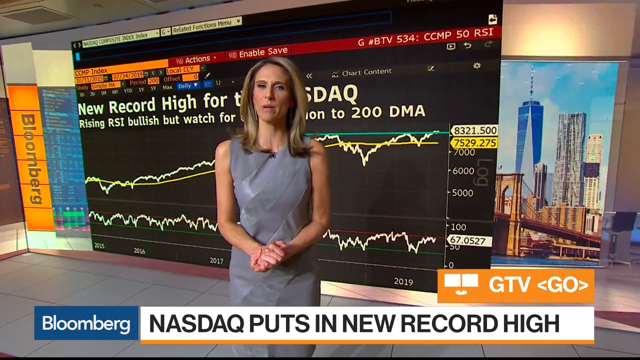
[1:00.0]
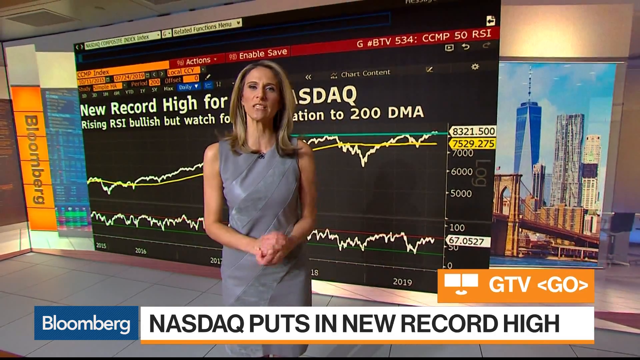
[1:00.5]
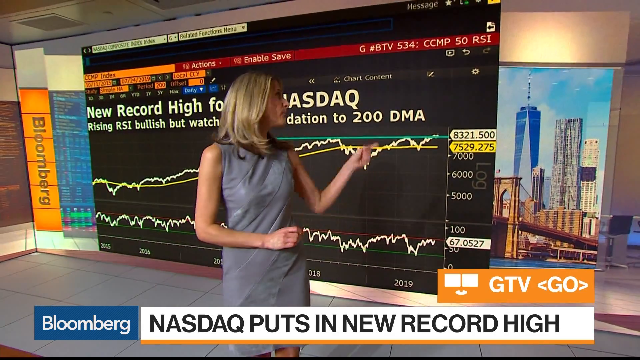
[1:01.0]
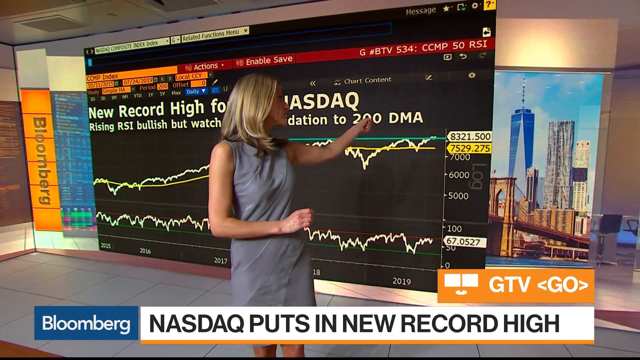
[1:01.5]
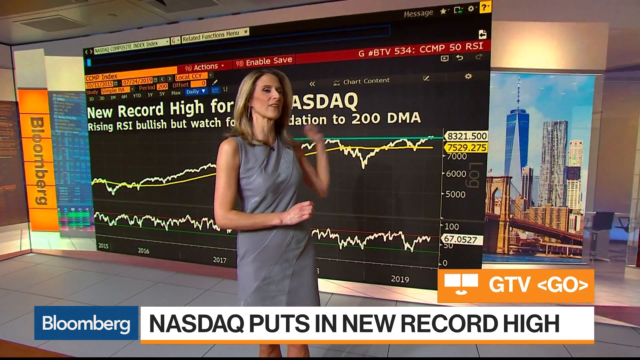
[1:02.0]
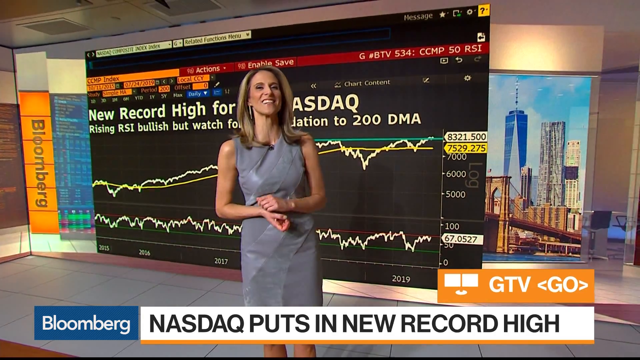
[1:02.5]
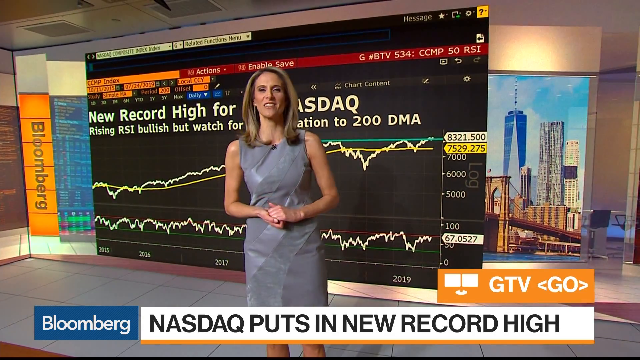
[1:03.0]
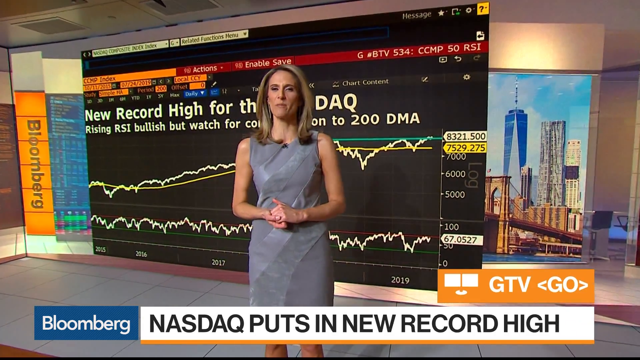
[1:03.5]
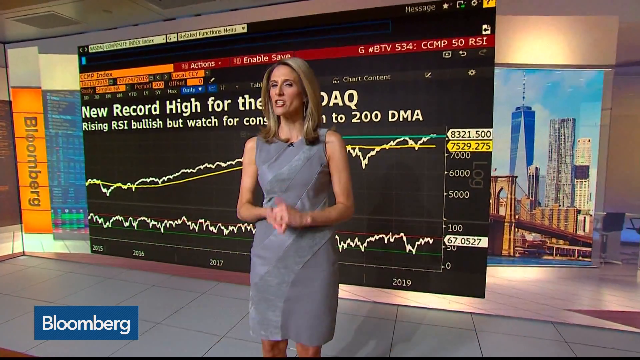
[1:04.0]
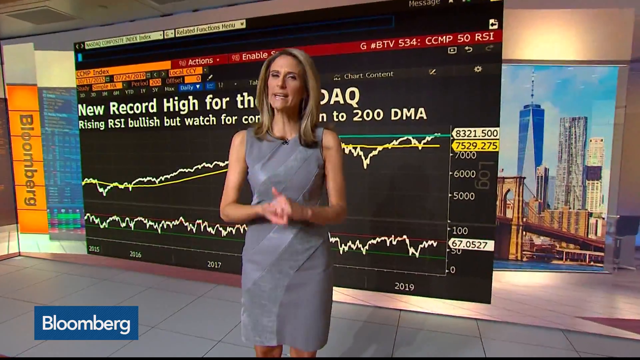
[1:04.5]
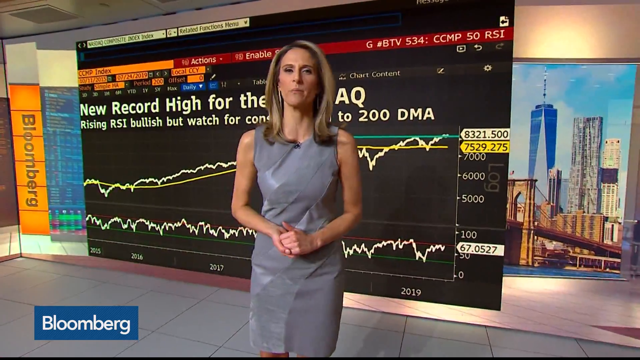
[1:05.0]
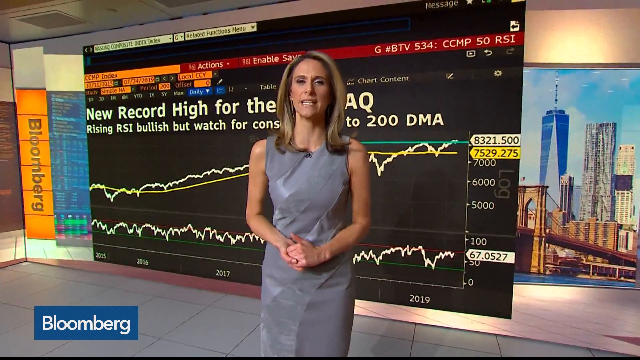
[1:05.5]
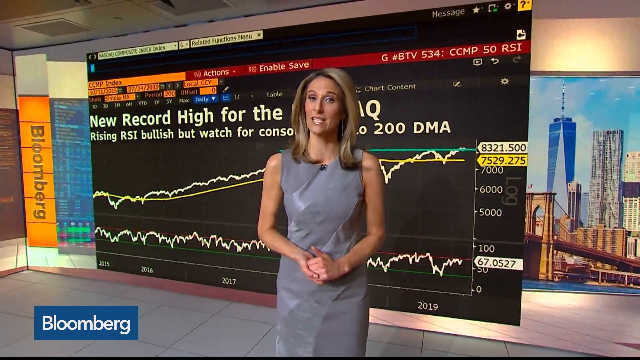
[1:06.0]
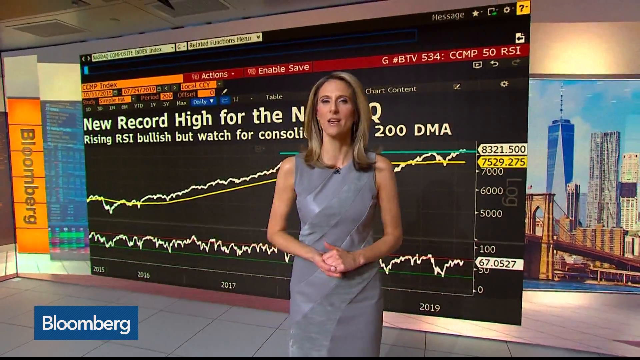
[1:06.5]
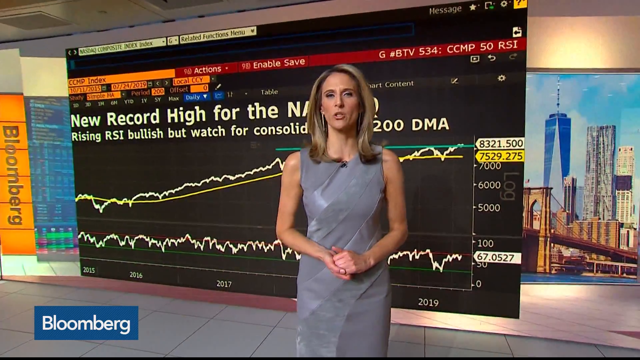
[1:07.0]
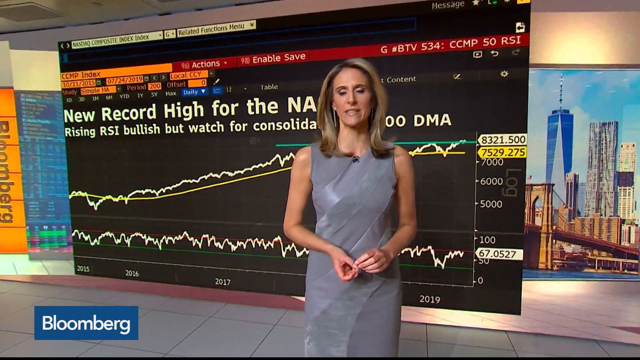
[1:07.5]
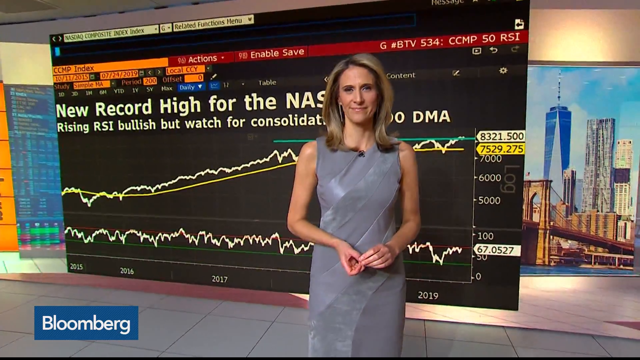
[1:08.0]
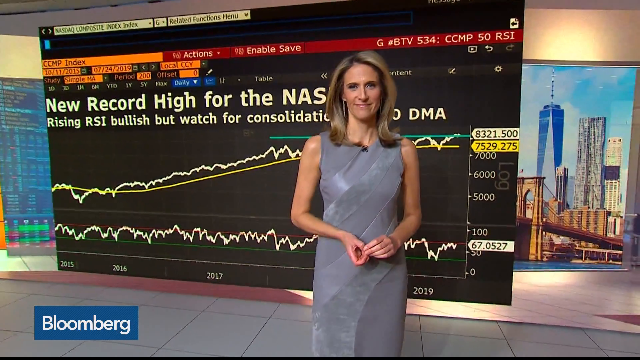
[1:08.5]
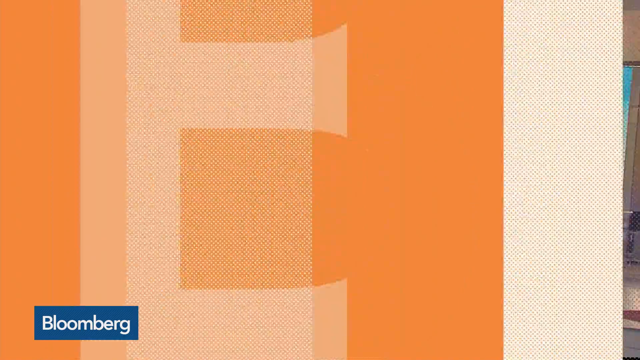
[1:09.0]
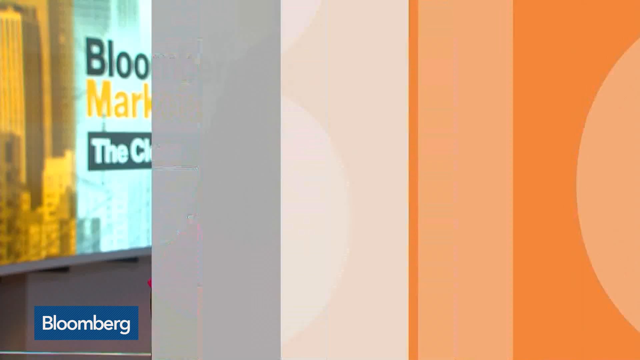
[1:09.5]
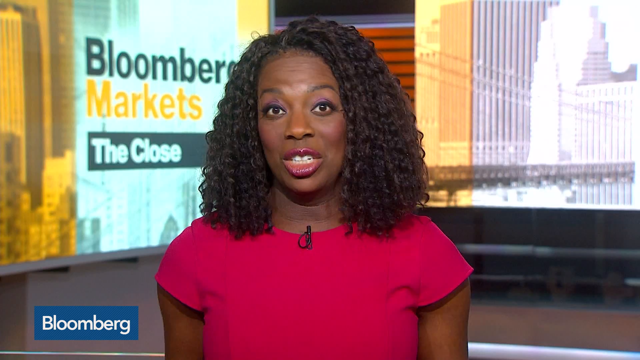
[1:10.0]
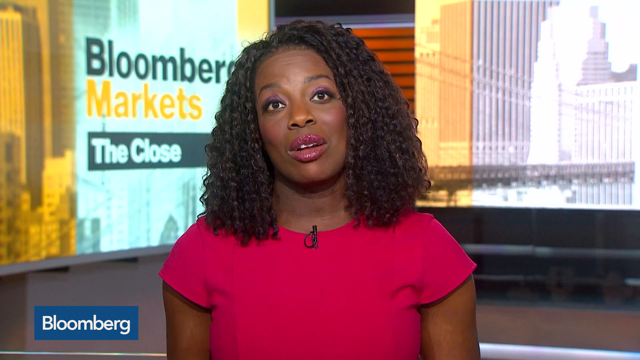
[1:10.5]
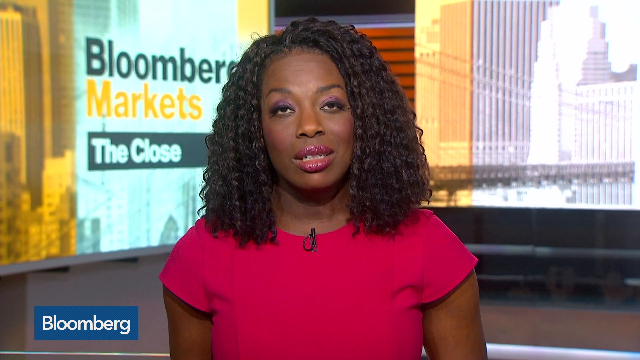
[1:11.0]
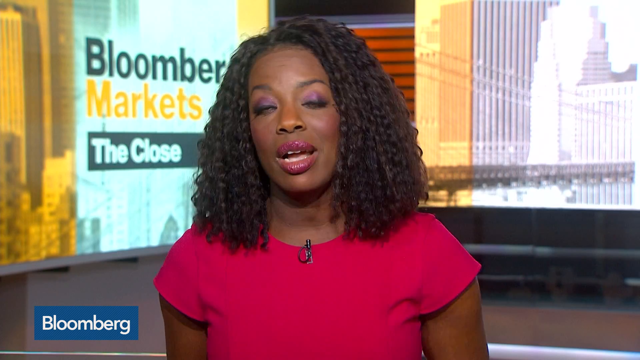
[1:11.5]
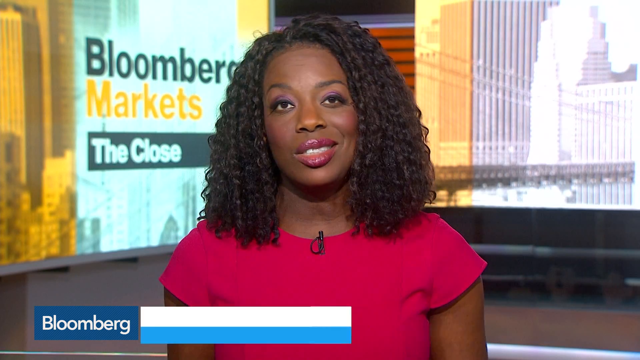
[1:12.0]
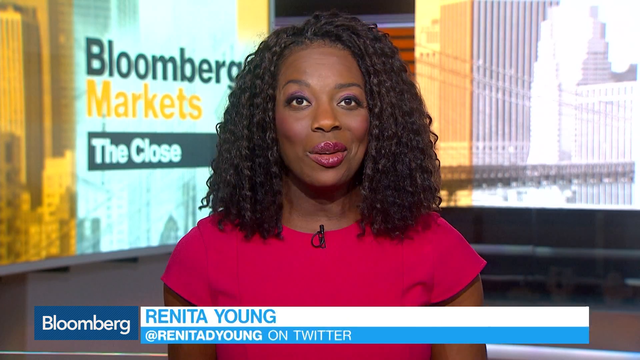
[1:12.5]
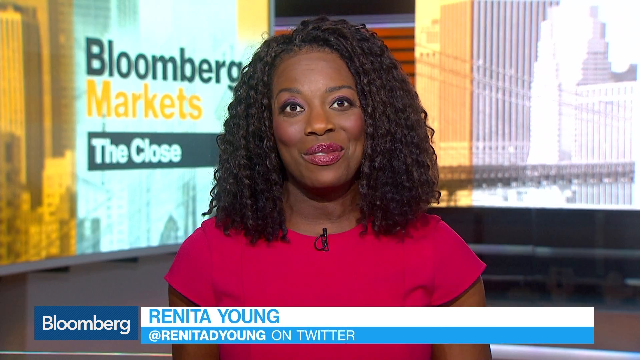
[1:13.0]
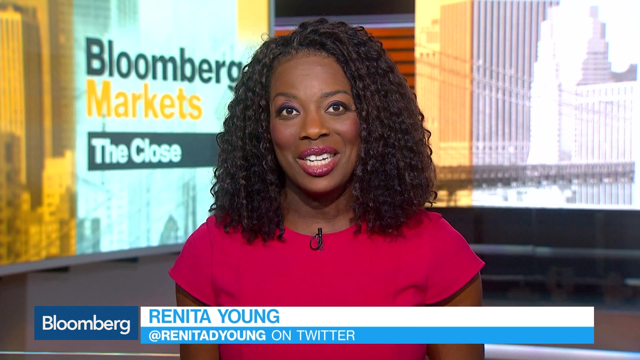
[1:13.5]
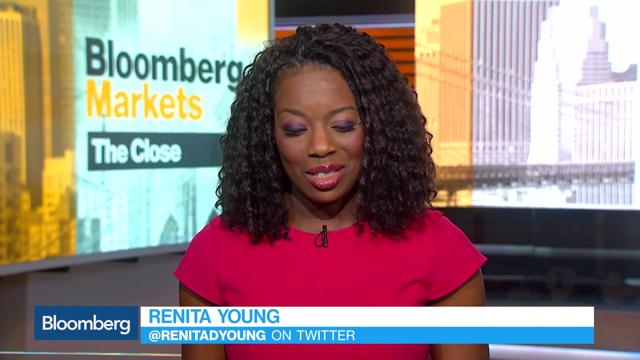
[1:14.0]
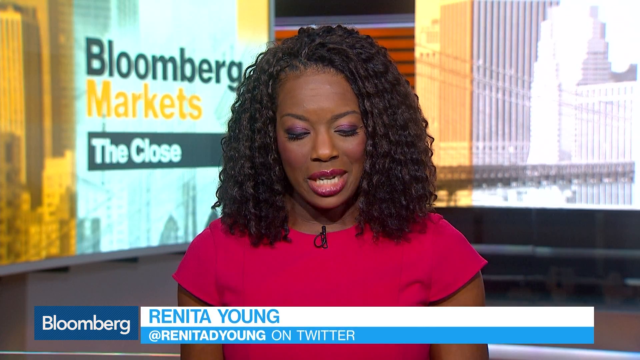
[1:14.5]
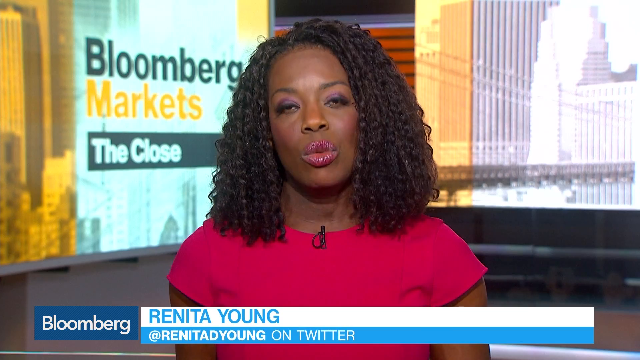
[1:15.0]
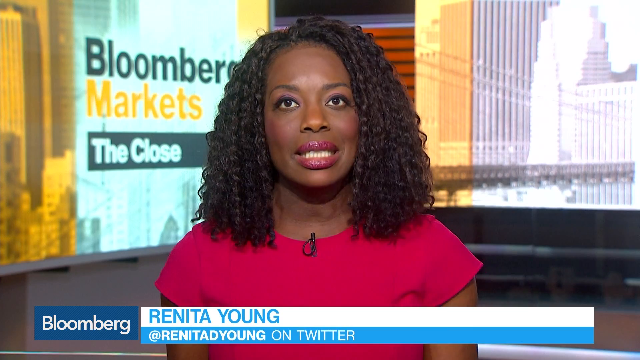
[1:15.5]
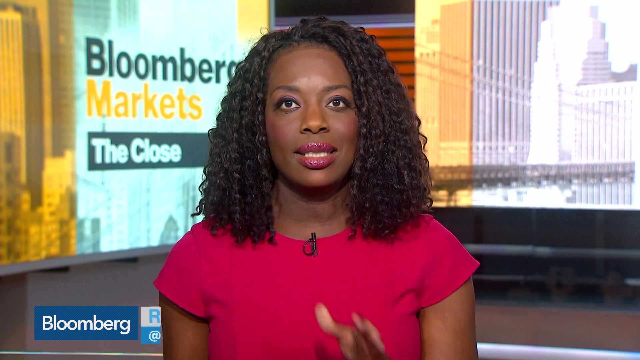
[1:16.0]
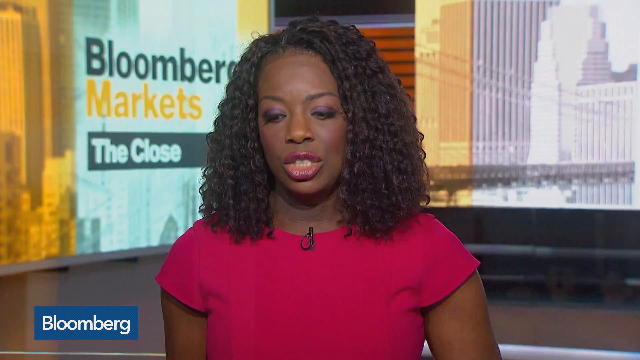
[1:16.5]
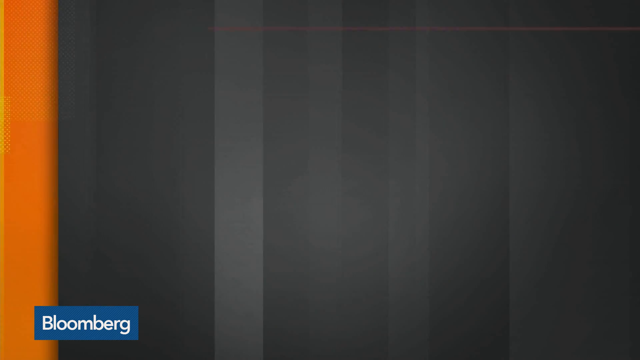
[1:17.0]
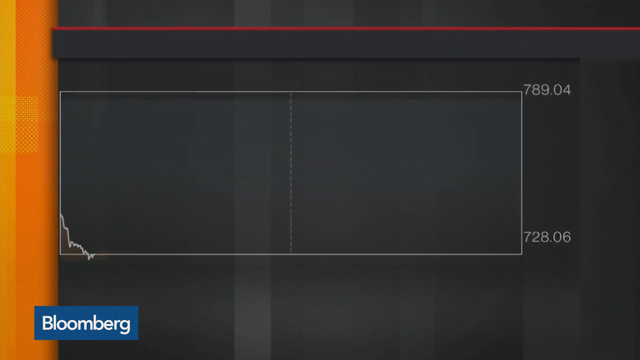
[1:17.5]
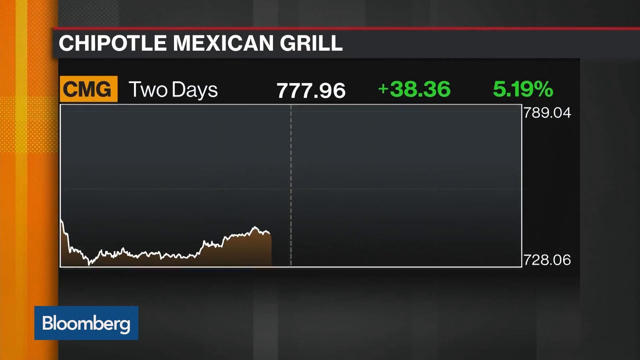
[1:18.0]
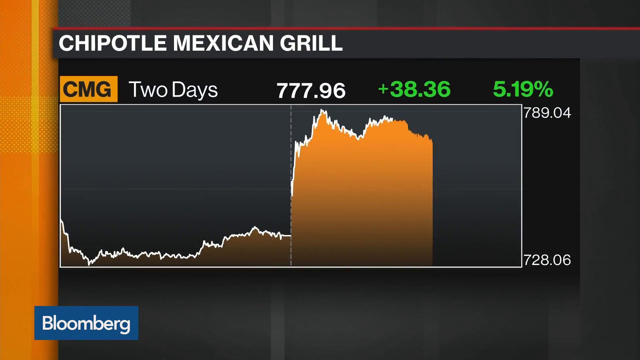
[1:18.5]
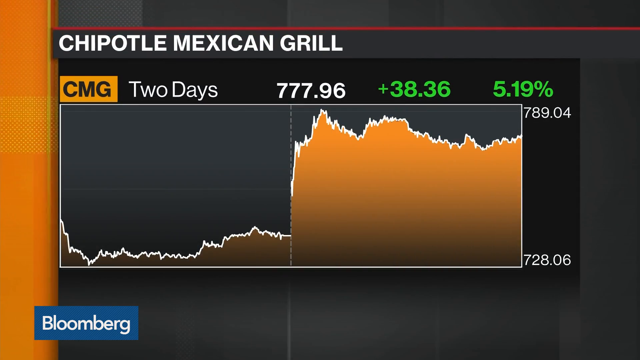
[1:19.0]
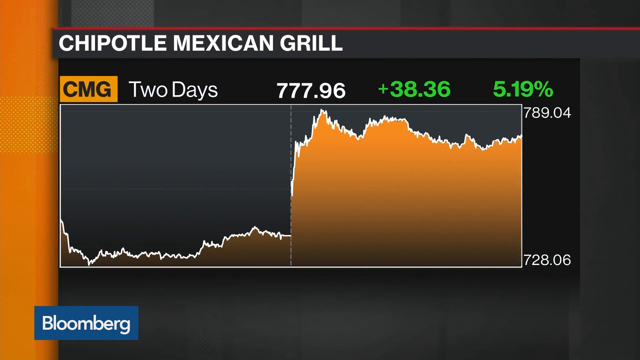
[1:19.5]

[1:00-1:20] The female news anchor in the silver gray dress continues to stand in front of the "NASDAQ puts in record high" infographic on the screen. When she is done giving information about the graph, she folds her hands down in front of her and passes off to her co-anchor. The co-anchor is the African American woman wearing pink seen earlier, with shoulder-length, coily curly hair. She is tight in the frame, visible only from the chest up, and she is smiling and happy. Her name is Renita Young. On screen, it says "CMG two days," "777.96," "+38.36" and "5.19%"; all the numbers are in green except 777.96, which is in white. It looks like Chipotle ended on a high note, as did the NASDAQ.